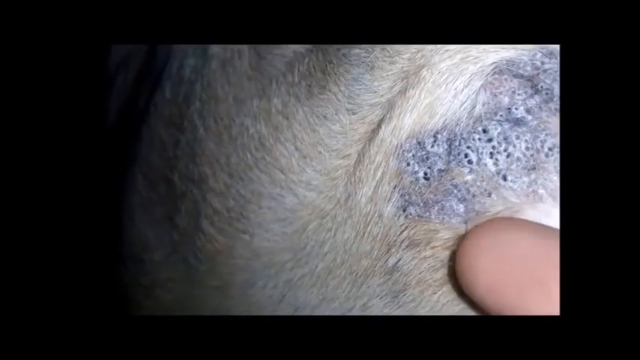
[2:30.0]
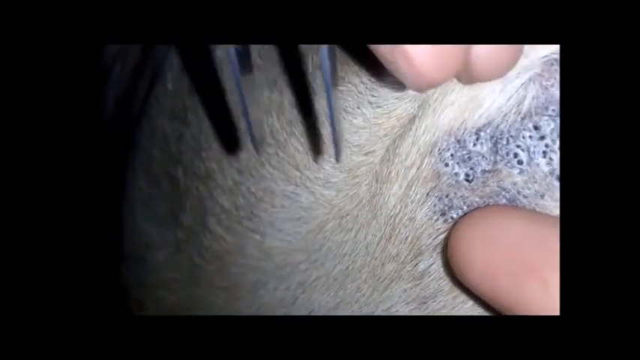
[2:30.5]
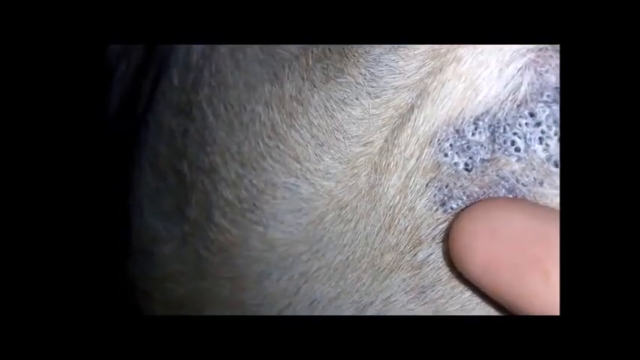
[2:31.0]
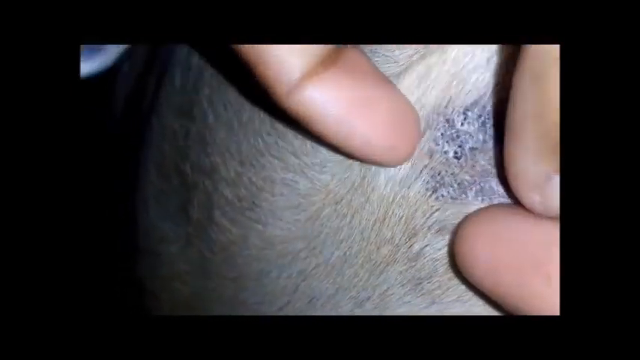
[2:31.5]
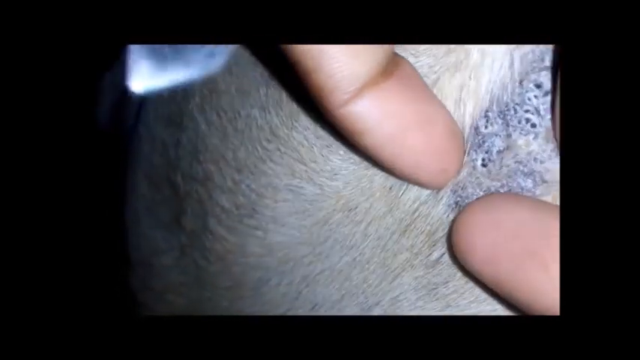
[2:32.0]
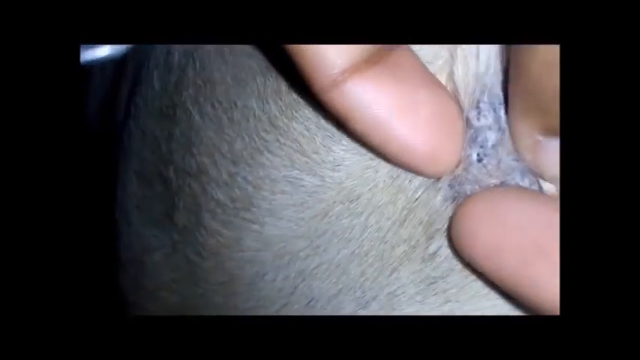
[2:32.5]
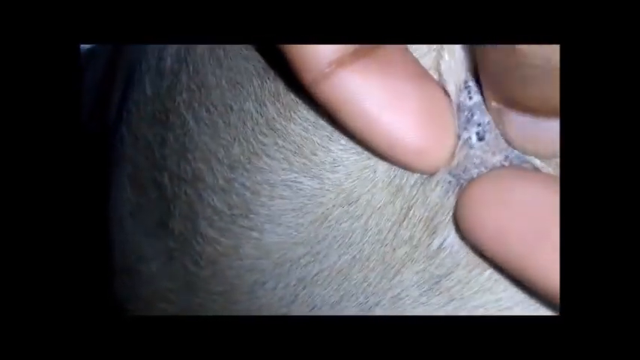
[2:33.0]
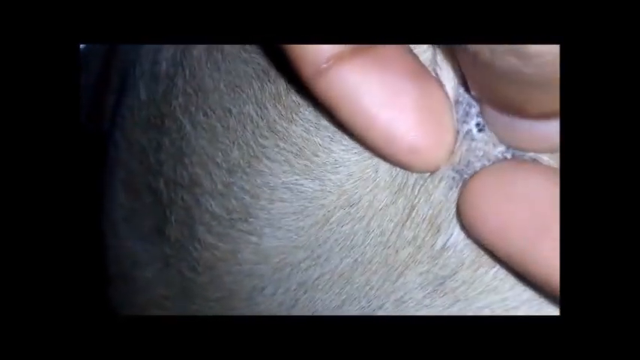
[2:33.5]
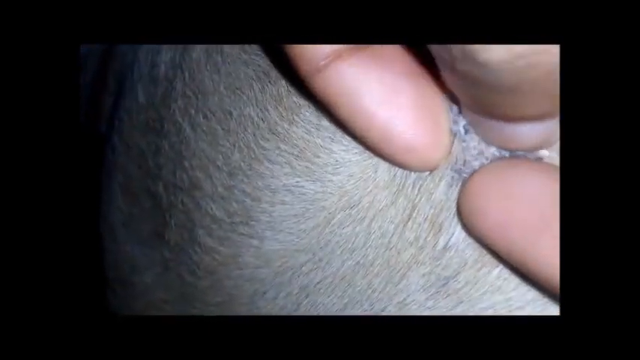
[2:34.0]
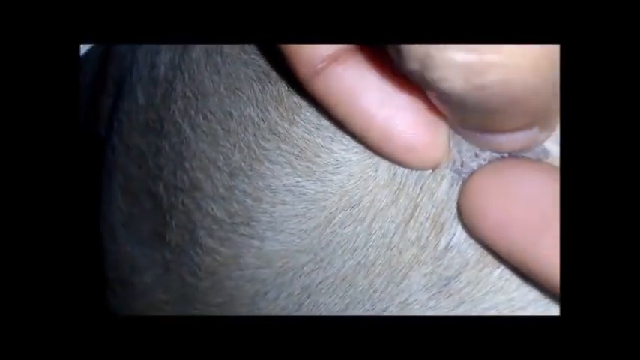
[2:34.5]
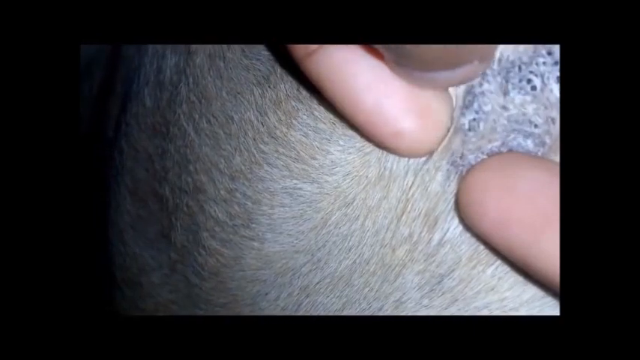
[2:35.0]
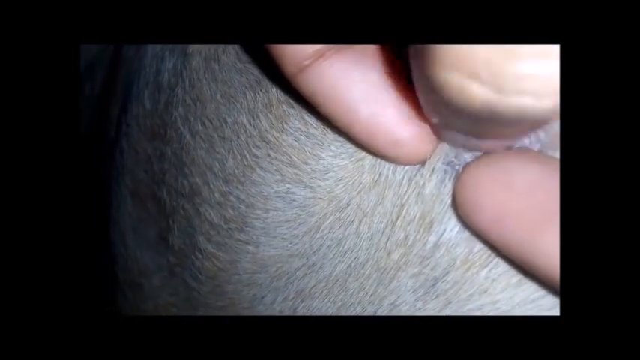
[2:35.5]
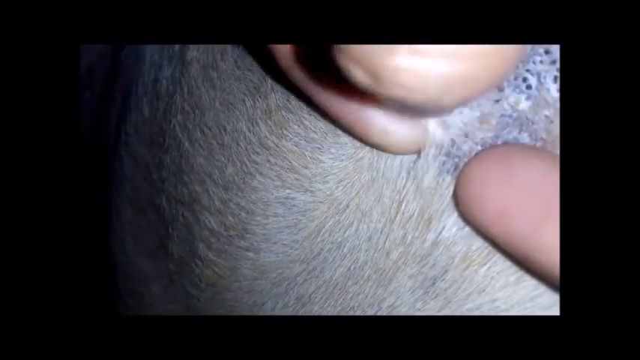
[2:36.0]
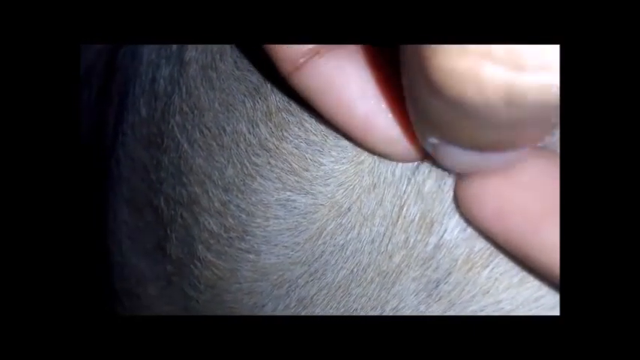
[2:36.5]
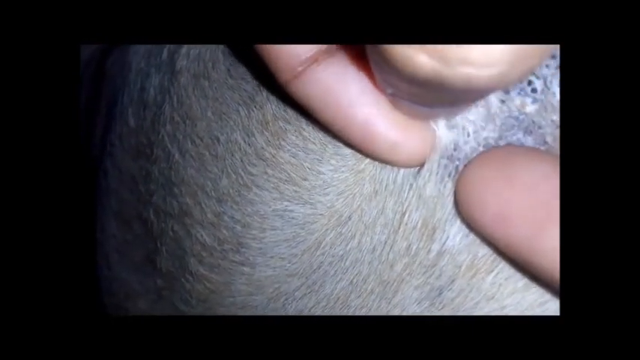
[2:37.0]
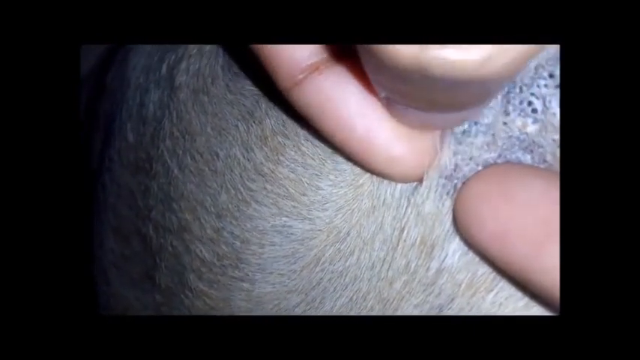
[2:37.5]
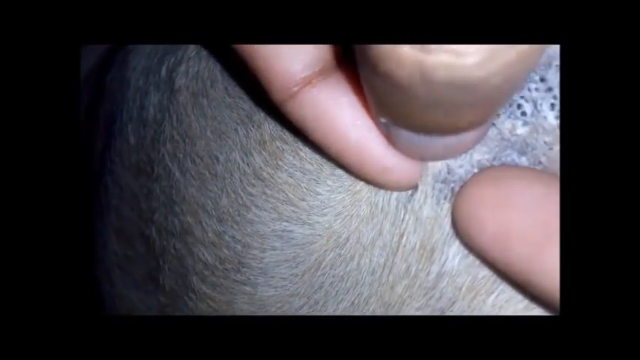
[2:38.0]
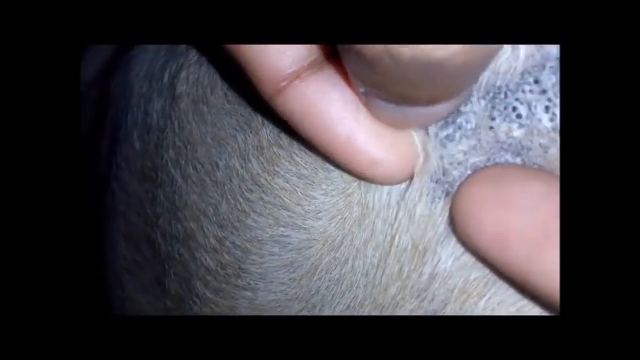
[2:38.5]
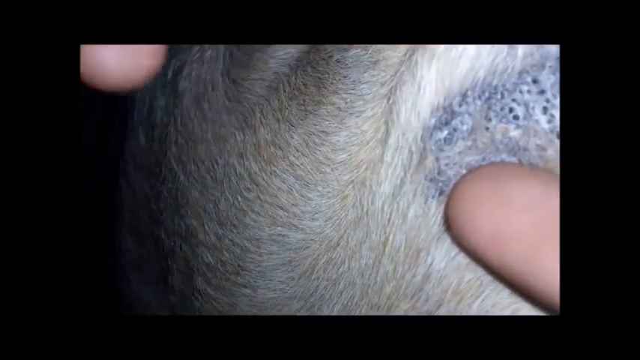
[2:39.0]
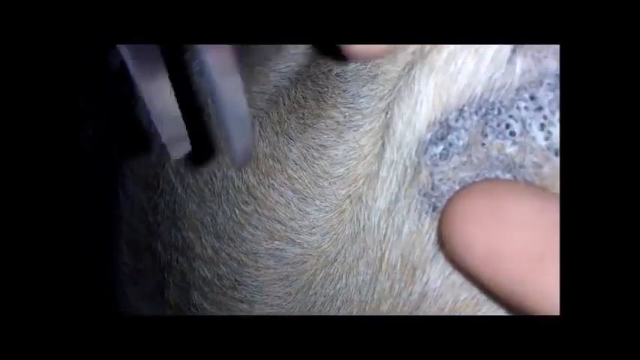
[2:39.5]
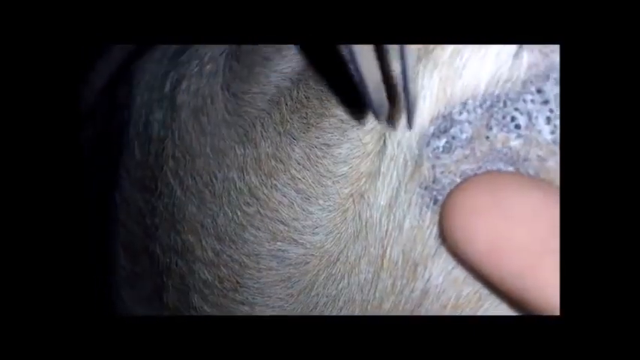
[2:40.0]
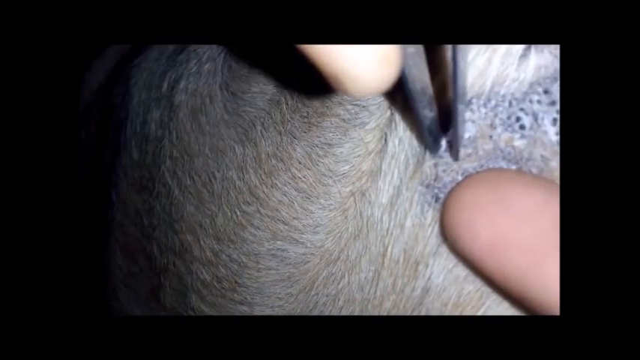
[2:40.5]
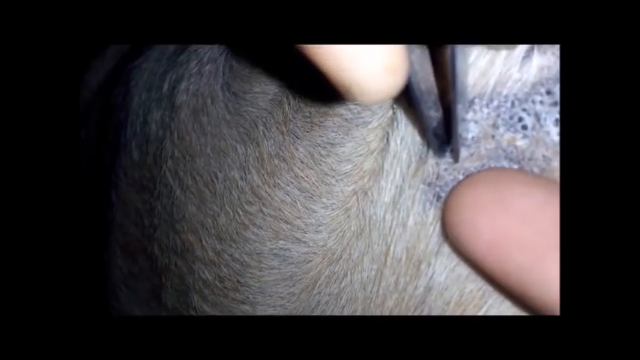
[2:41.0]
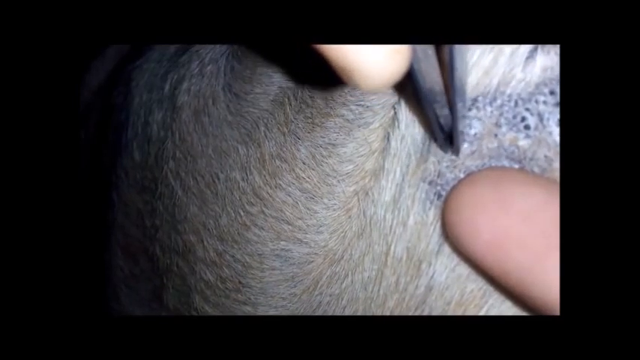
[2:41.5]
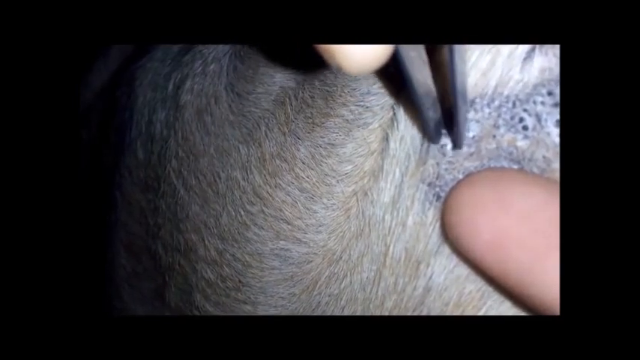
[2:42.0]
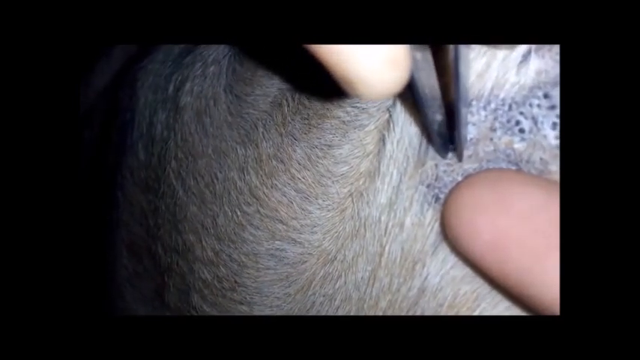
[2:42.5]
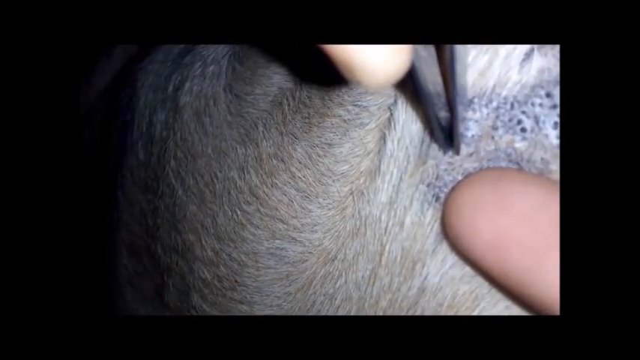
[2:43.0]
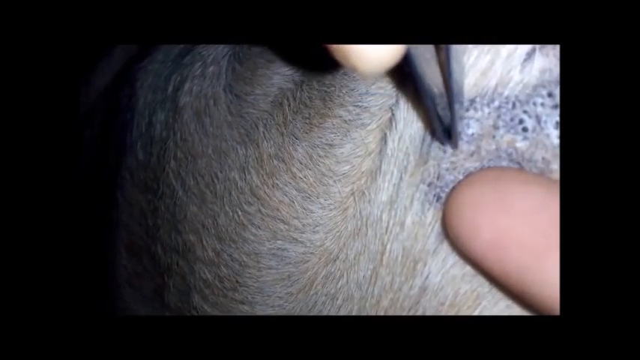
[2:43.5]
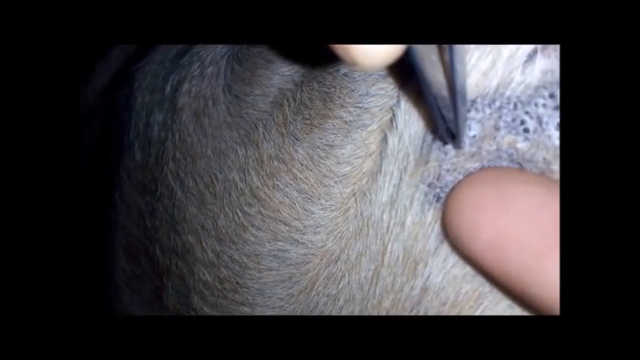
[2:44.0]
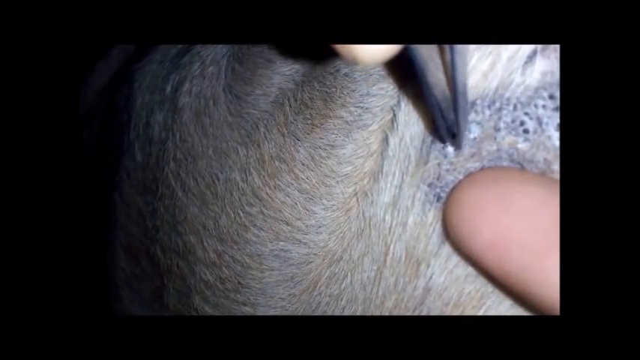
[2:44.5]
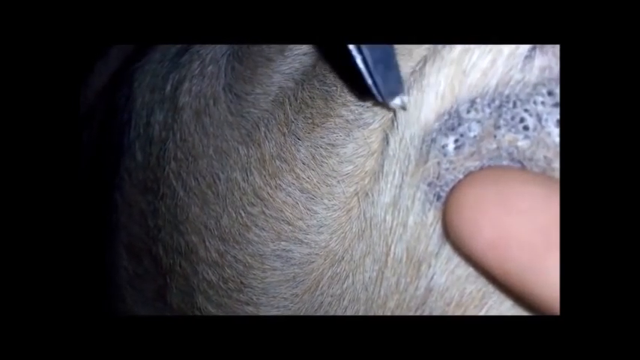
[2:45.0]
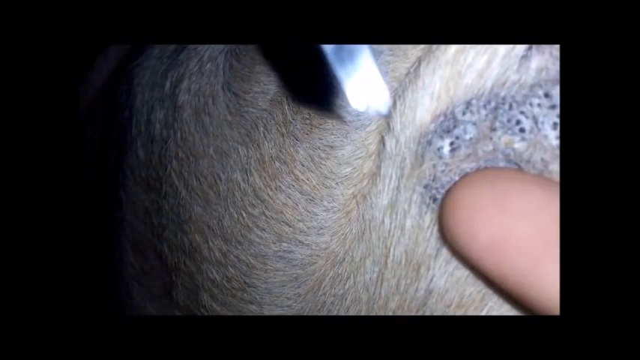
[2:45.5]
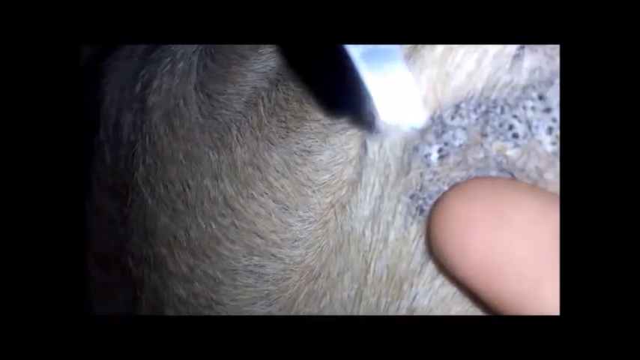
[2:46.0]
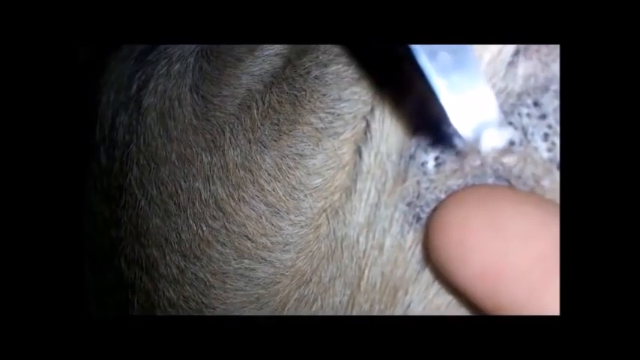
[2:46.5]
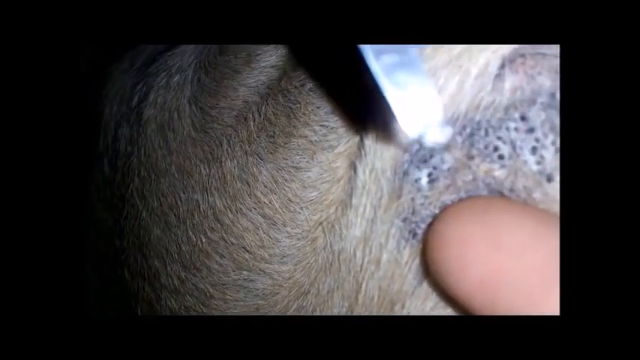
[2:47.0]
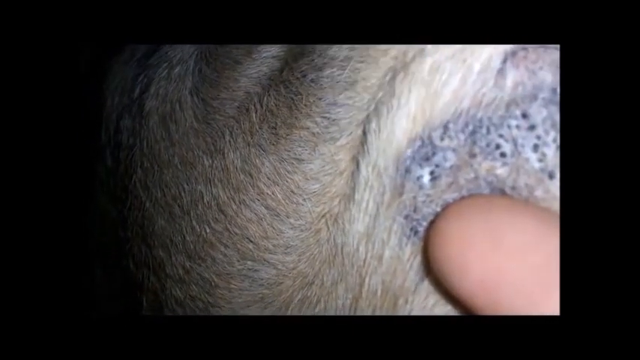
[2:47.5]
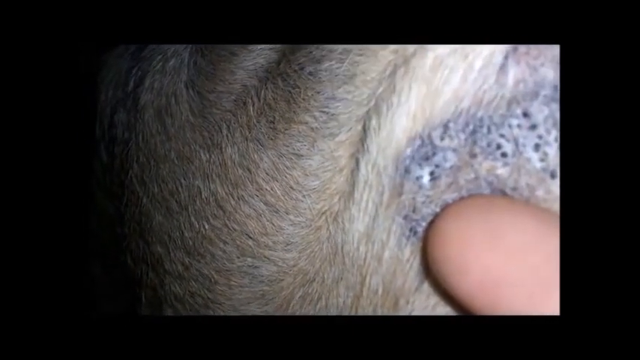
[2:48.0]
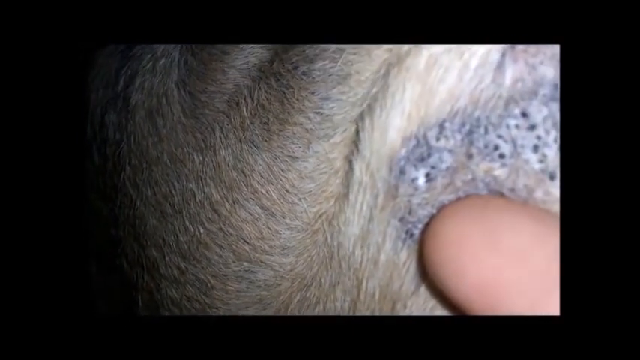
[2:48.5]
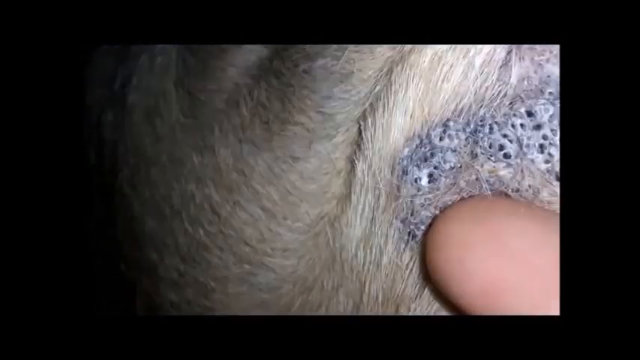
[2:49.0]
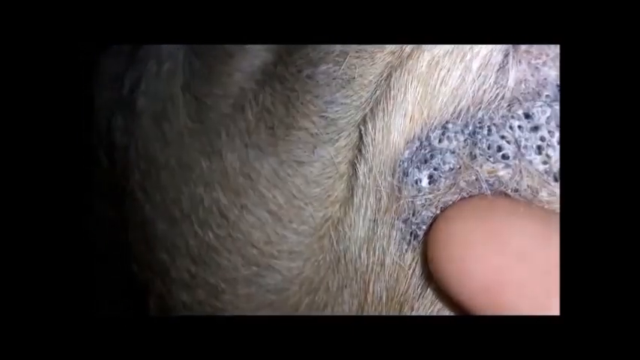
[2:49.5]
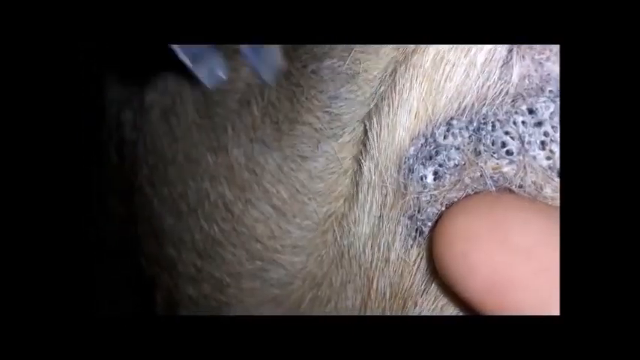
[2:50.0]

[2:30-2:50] The animal with cream hair or fur has a large cyst-like area with raised black bumps surrounded by white. A person, possibly a vet, squeezes the affected area. The person takes a pair of tweezers in one hand but then squeezes a section of the affected area between their thumb and finger. The person is not wearing gloves and scratches at the lesions with his finger. This has no effect, so the person takes the tweezers, grips one of the blackheads and attempts to pull it off the skin. The pulled-off piece is brought up but cannot be seen clearly because the image is too blurry. The camera focuses on the white spot where the blackhead has been removed, and the video ends.